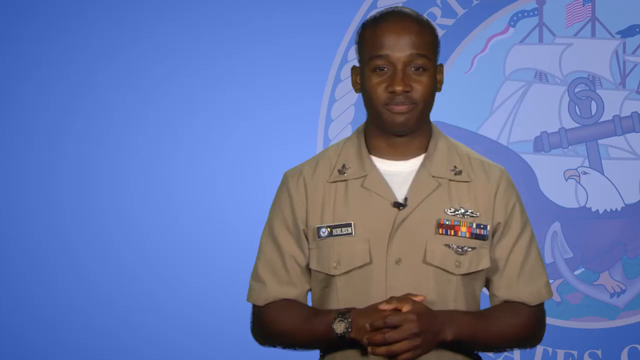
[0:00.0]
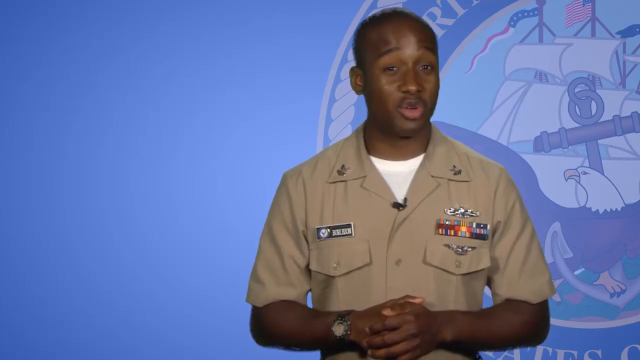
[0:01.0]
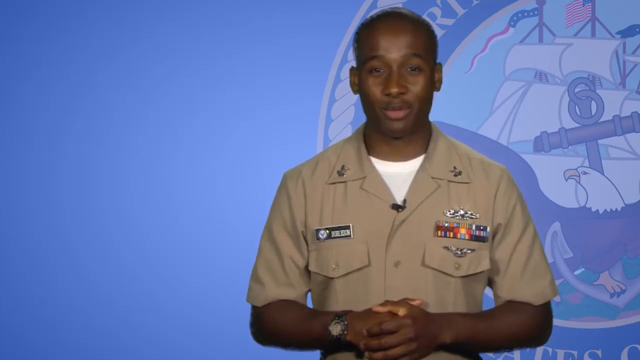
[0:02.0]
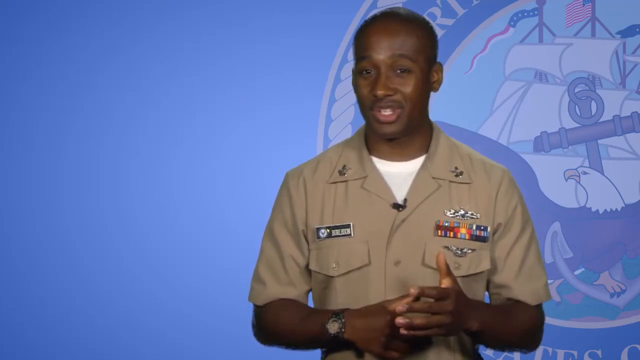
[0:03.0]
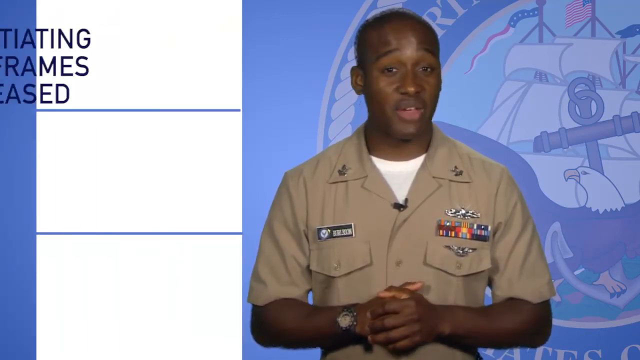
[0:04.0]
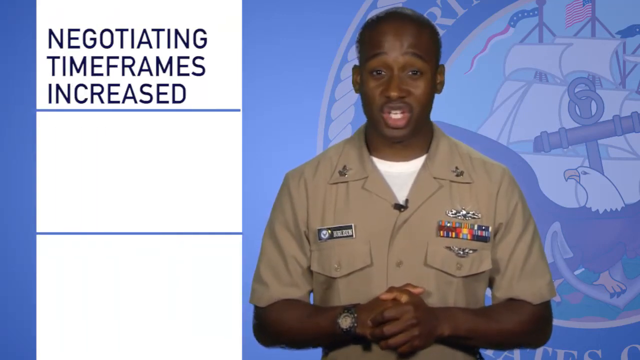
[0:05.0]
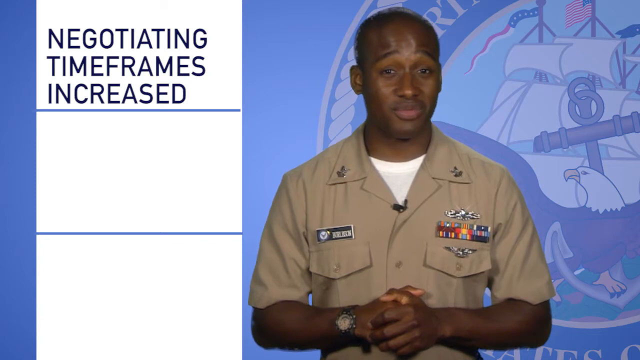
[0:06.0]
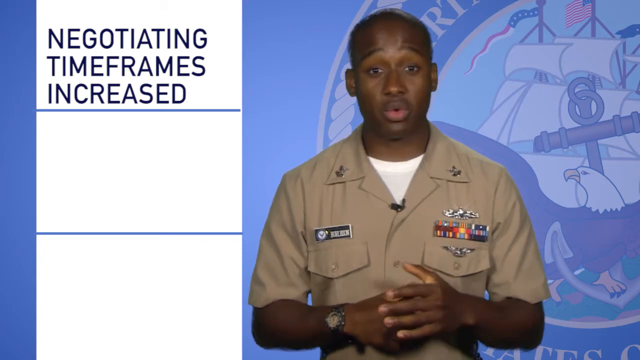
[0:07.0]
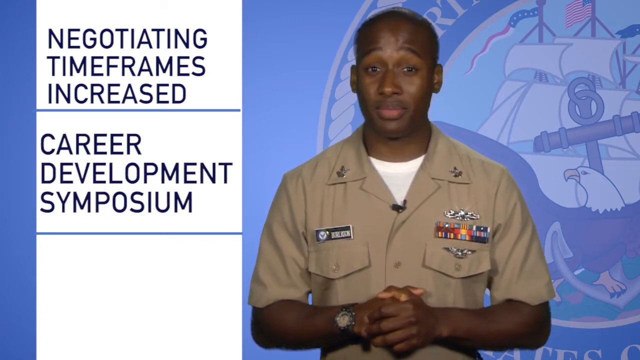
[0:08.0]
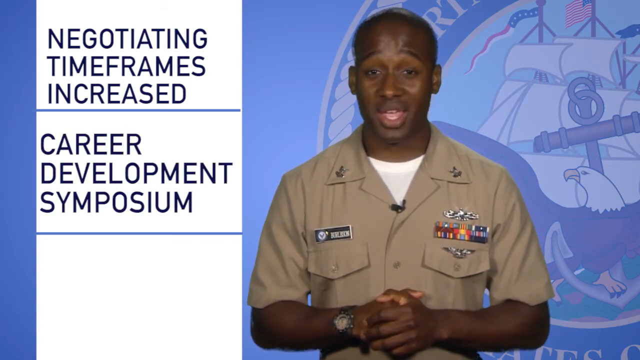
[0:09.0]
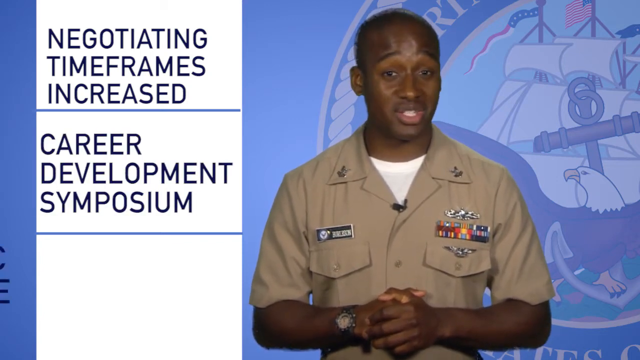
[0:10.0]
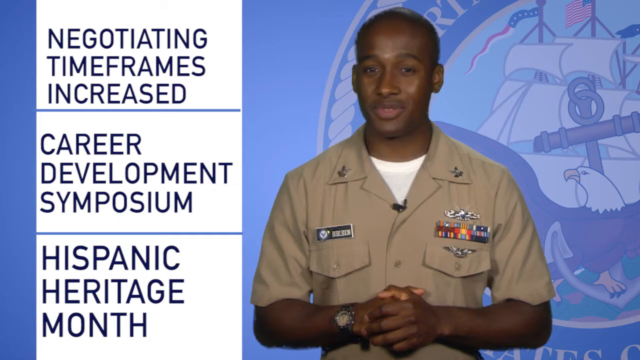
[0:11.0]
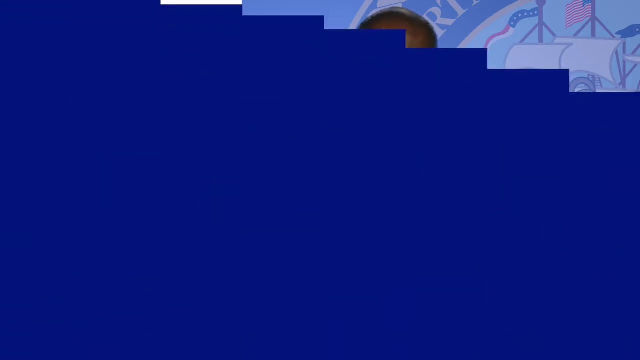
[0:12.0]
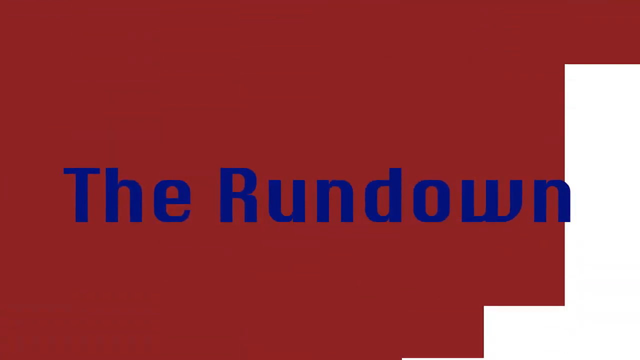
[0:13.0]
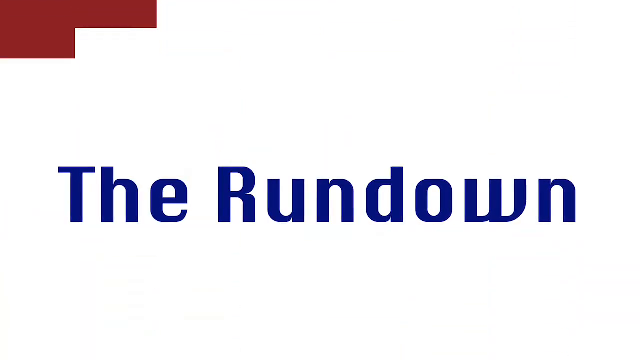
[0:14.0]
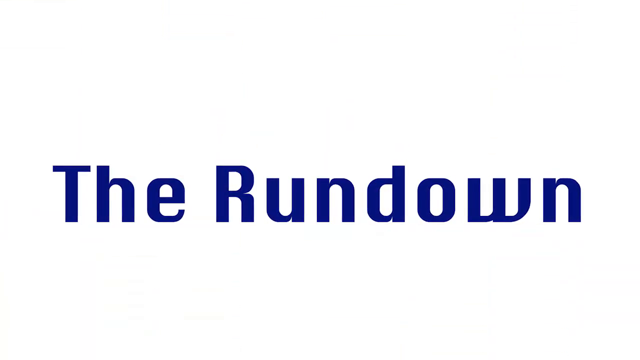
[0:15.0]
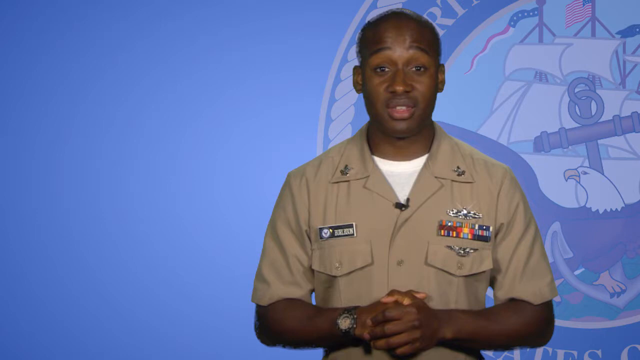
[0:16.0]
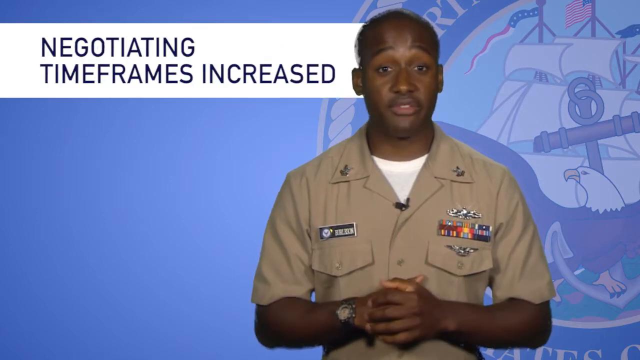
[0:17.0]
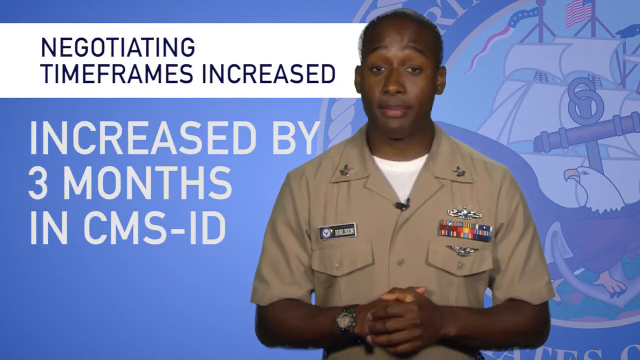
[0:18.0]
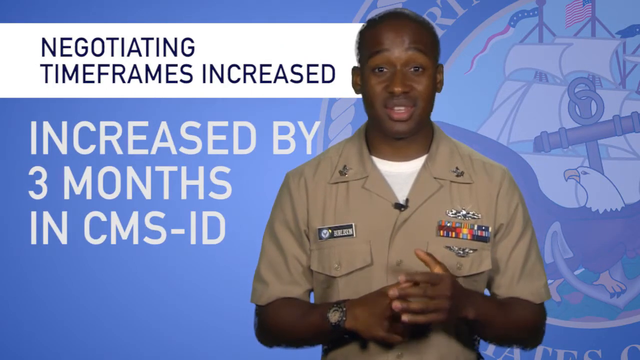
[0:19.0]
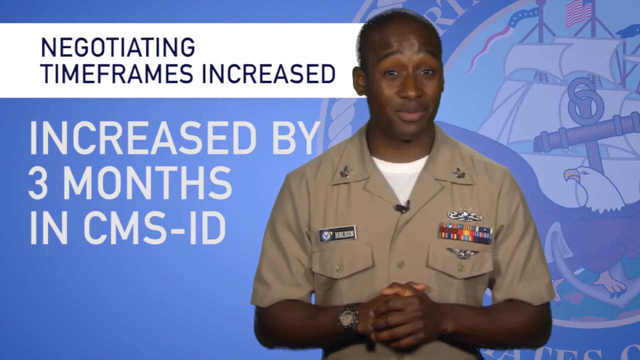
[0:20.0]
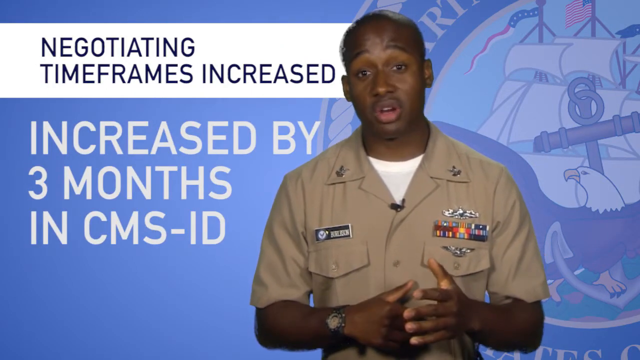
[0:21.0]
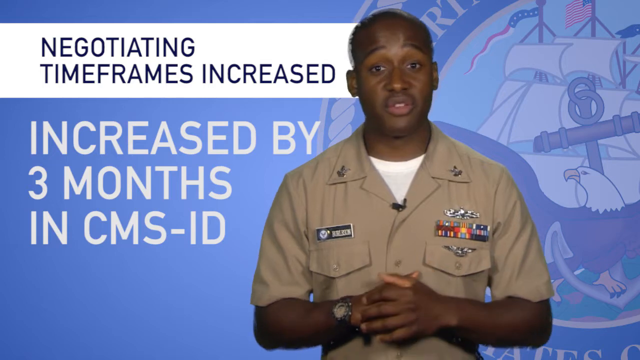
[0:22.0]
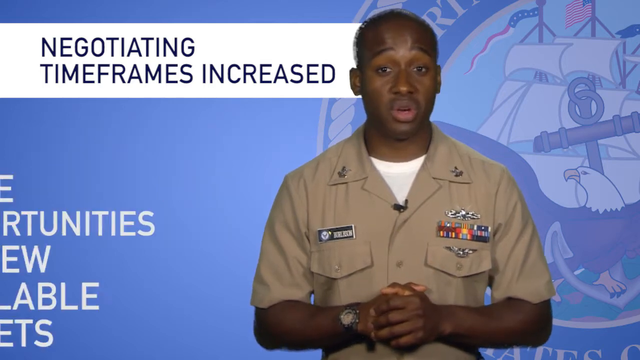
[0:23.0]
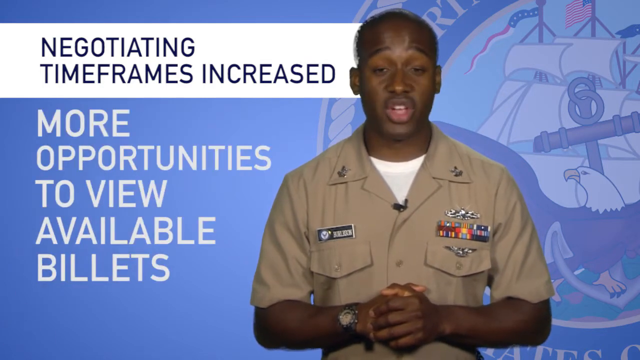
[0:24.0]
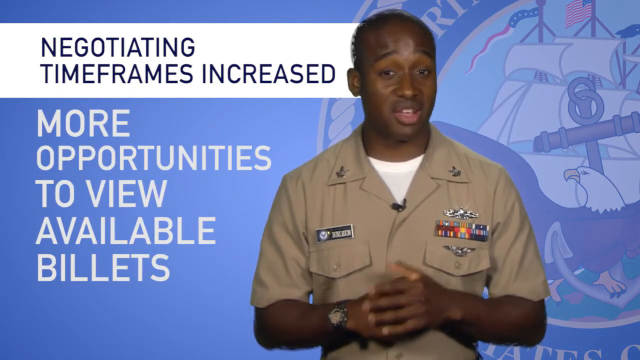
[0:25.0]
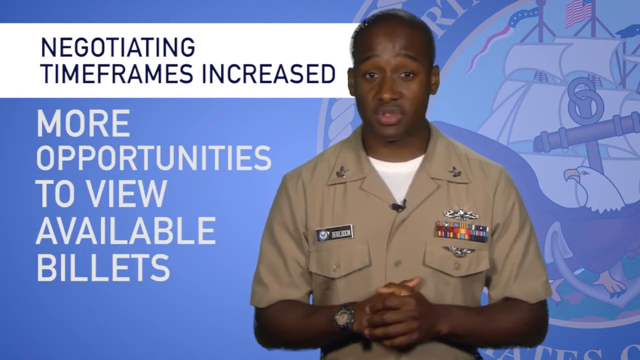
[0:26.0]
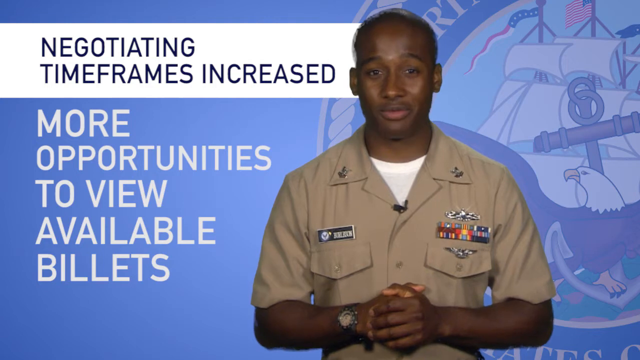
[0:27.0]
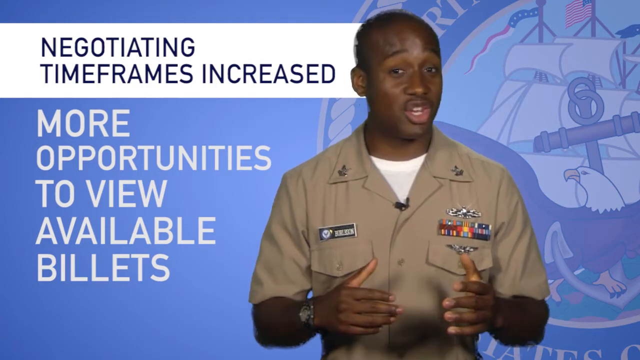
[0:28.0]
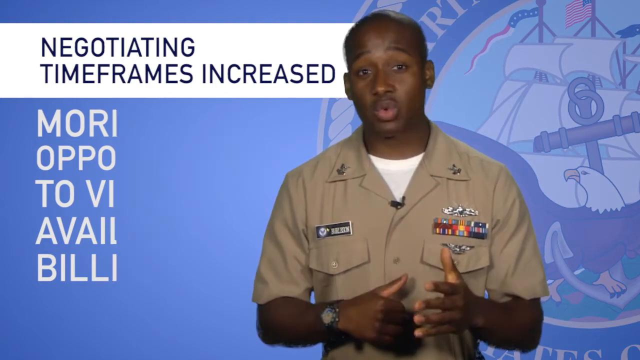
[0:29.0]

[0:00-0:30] A young black man wears a khaki shirt with badges on both pockets. He stands in front of a background showing a ship with an American flag attached to it and an eagle toward the bottom of the ship. He speaks while gesturing with his hands. On the left side of the screen, words appear: "negotiating timeframes increased", underneath it "career development symposium", and last "Hispanic Heritage Month". A blue background appears, then a red background, and the words "the rundown" are written in blue before changing to white. The man appears again, and on his left is written "negotiating timeframes increased" and "increased by three months in CMS ID". Another text appears reading "More opportunities to view available billets".